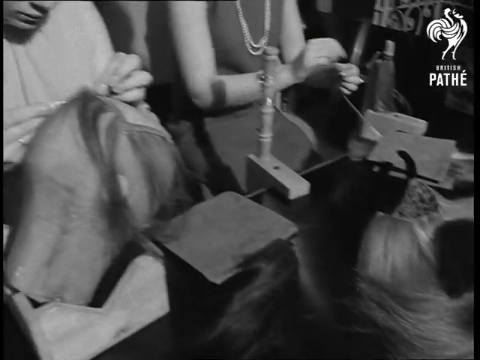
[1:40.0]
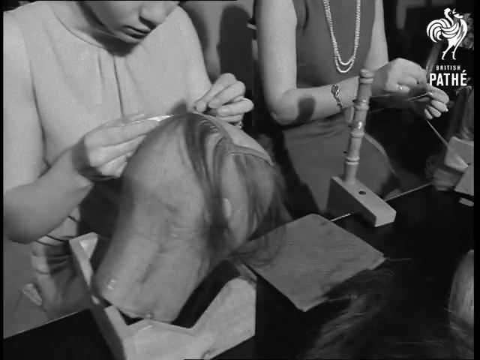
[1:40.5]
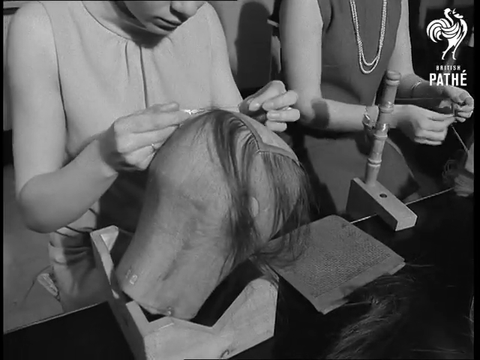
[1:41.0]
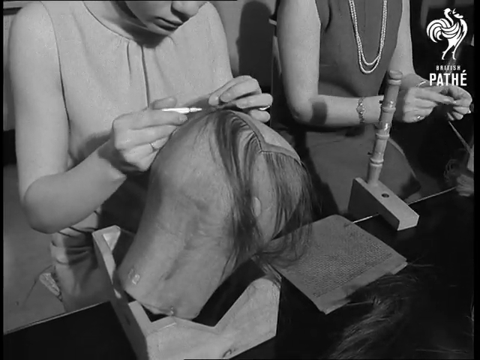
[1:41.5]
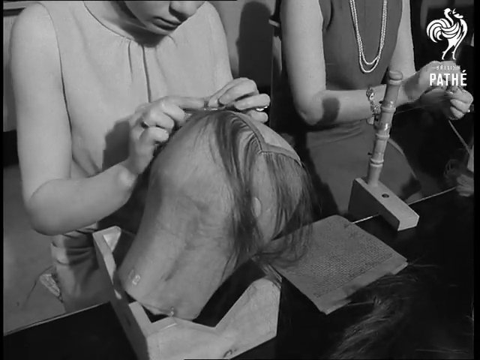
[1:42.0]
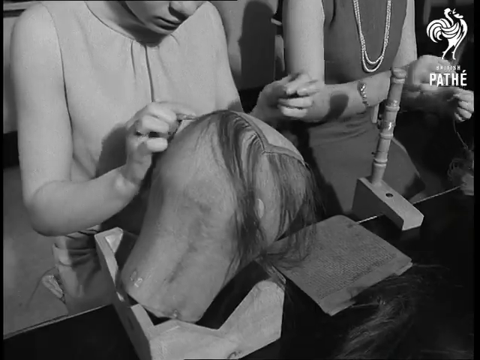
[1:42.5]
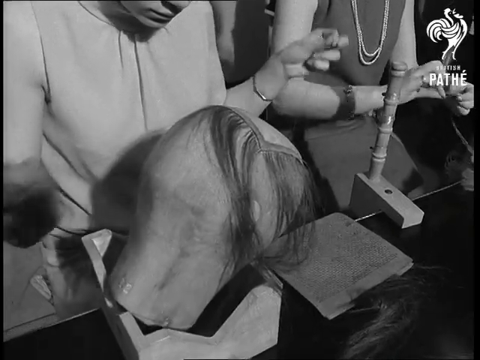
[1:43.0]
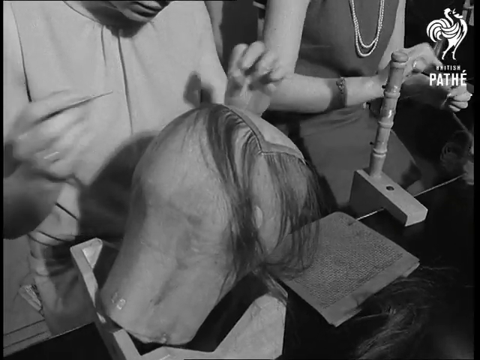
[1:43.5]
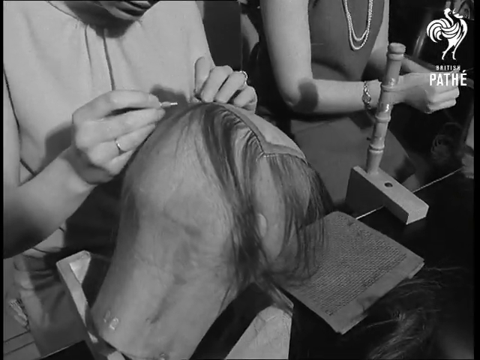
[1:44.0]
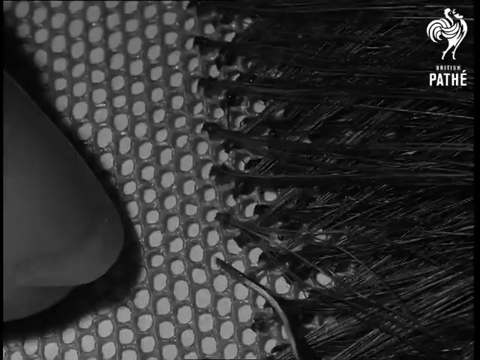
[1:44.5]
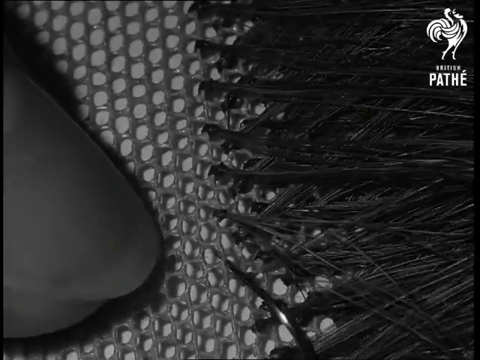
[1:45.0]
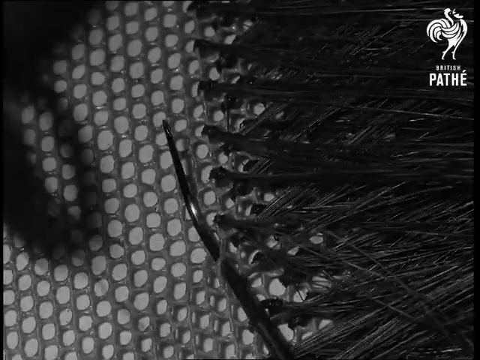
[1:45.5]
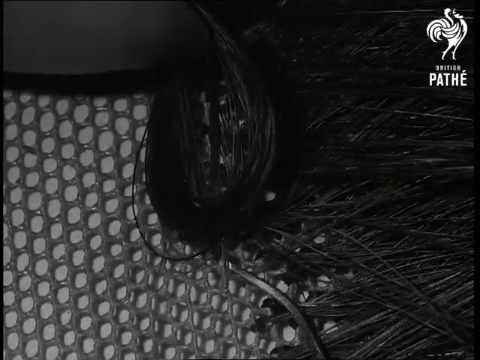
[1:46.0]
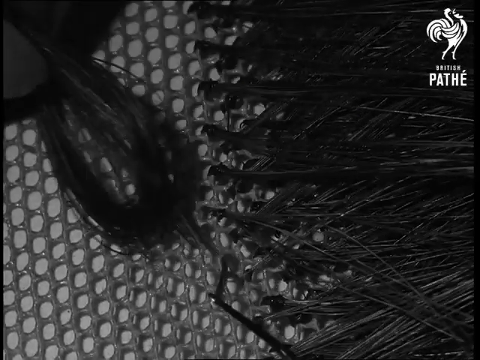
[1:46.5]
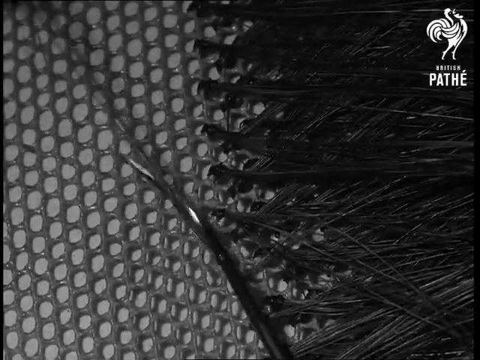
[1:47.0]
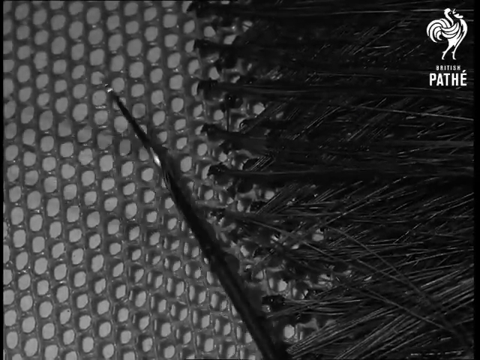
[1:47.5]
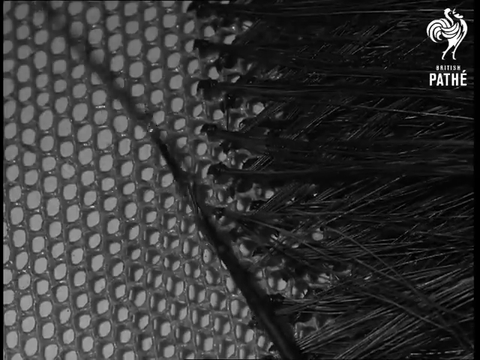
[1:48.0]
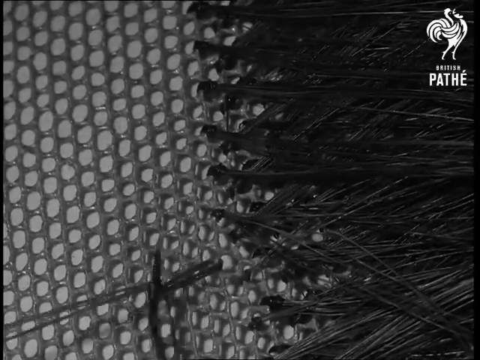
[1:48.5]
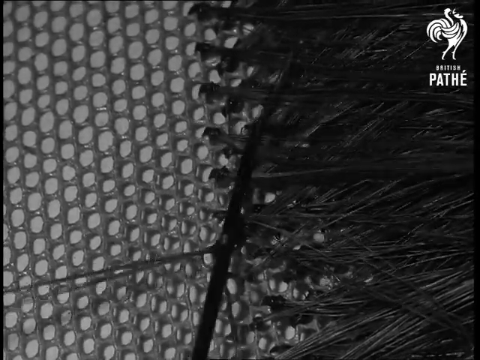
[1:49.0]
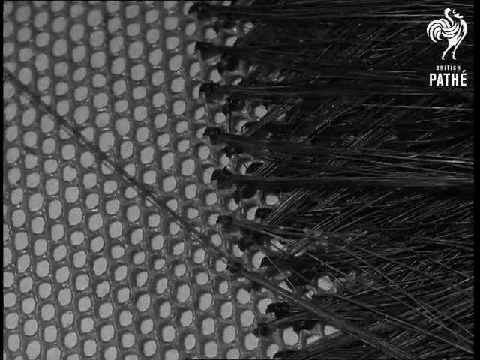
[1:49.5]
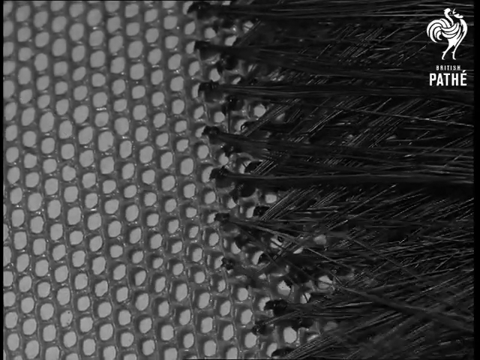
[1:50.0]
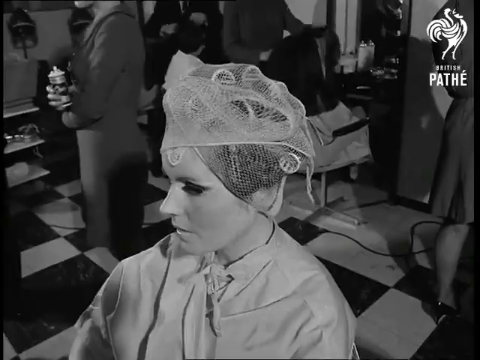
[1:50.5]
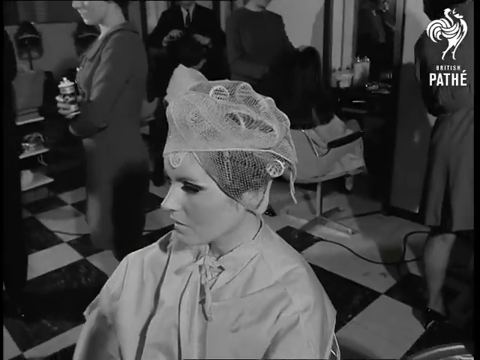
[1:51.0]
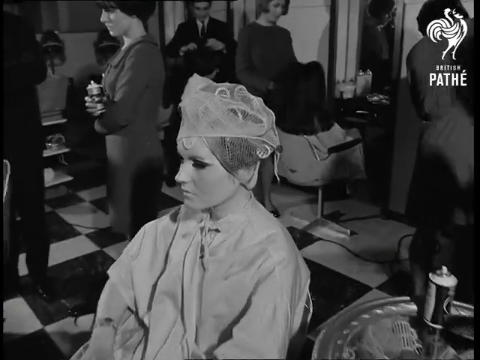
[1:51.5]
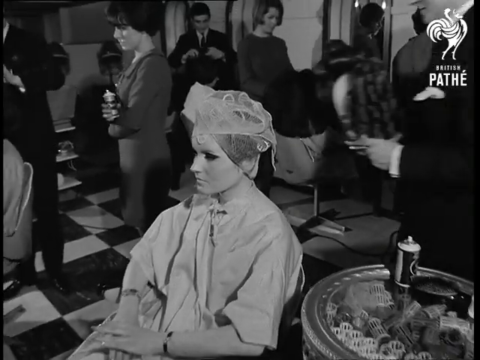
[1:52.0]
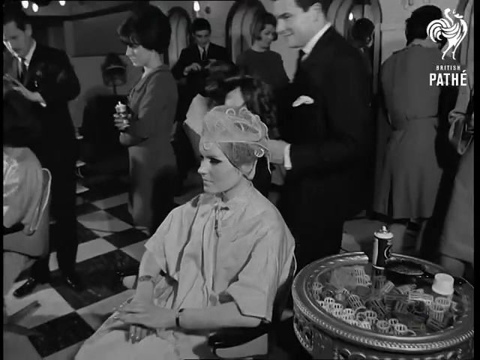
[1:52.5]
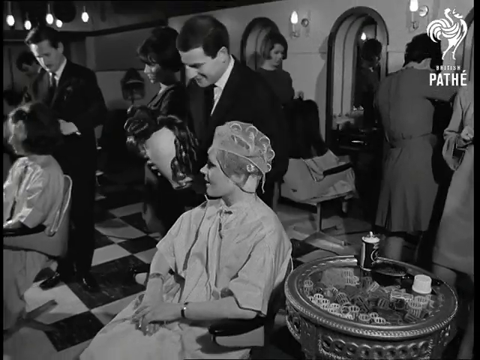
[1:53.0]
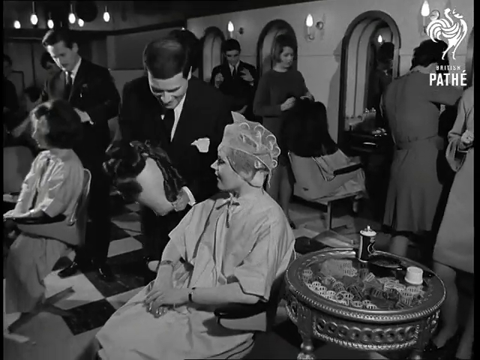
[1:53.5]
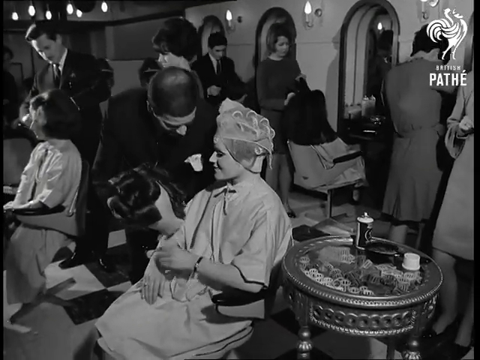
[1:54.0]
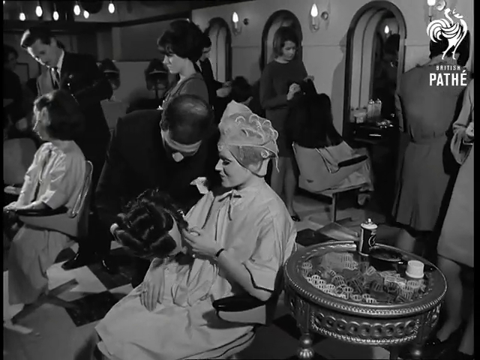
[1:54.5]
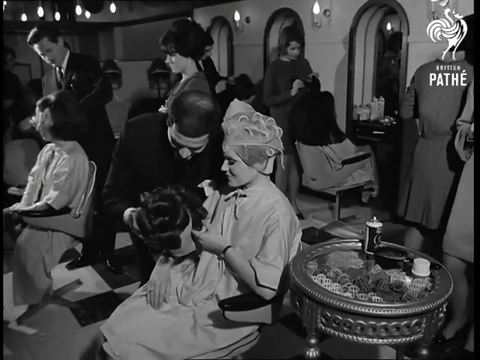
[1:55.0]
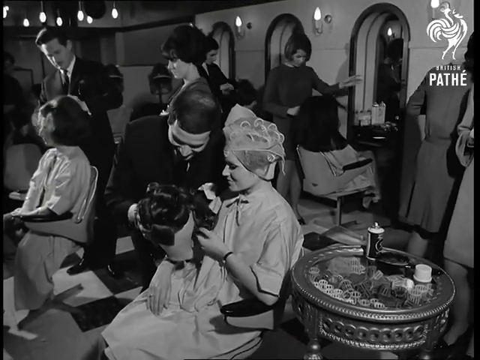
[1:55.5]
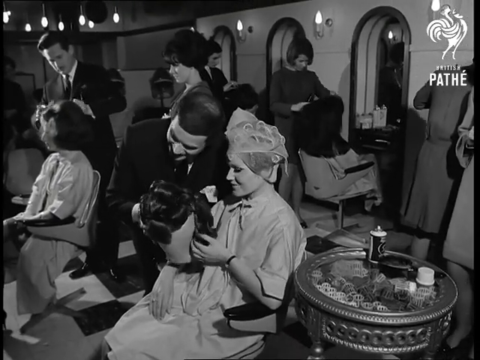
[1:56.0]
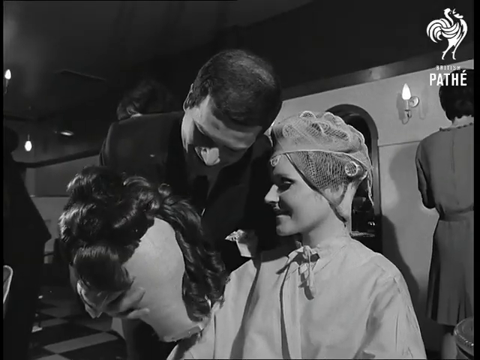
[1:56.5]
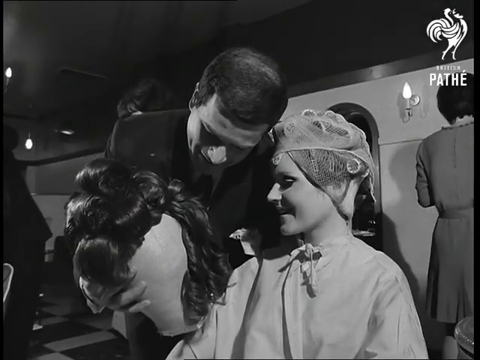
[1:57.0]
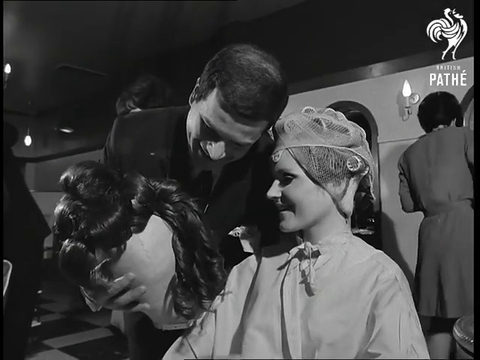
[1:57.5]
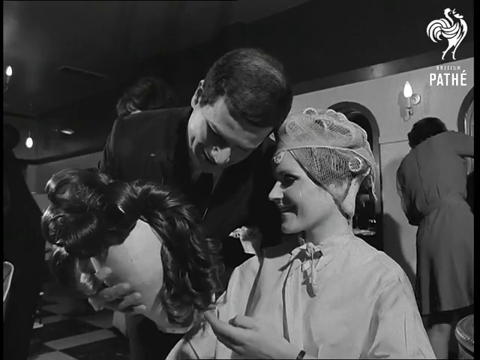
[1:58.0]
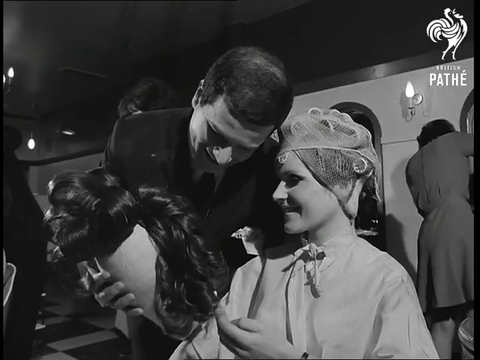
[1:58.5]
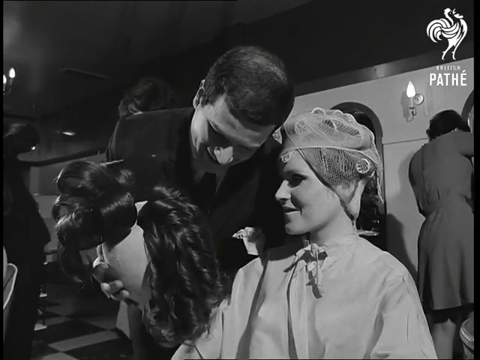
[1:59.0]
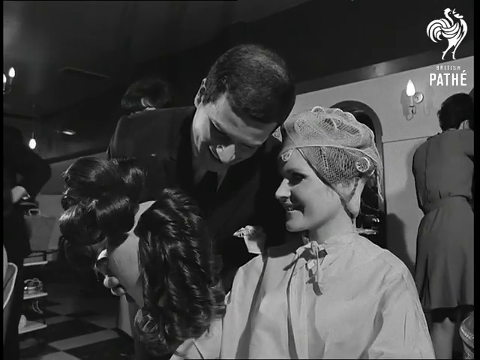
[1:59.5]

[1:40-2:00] Two female sewists work on different parts of the wig, putting them back together. The woman on the far right wears a sleeveless dress and a double-layered pearl necklace. The woman on the far left also wears a sleeveless dress, but with a pleated high neckline, and looks closely at a mannequin head with strands of hair. A close-up shows hair fibers being sewn into the mesh inside of the wig. A close-up then shows the woman waiting for her wig, with many people and other customers waiting for their wig operations in the background. The man in the dark suit brings her the new wig on a mannequin head; it is now dyed a dark color, curled and styled. The woman smiles and touches the hair.